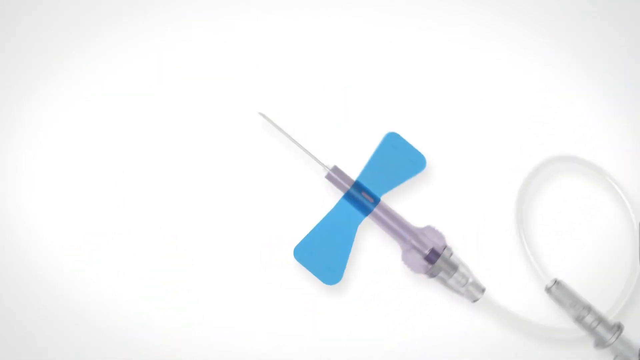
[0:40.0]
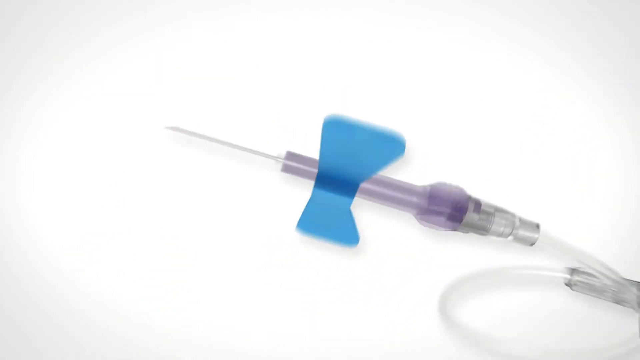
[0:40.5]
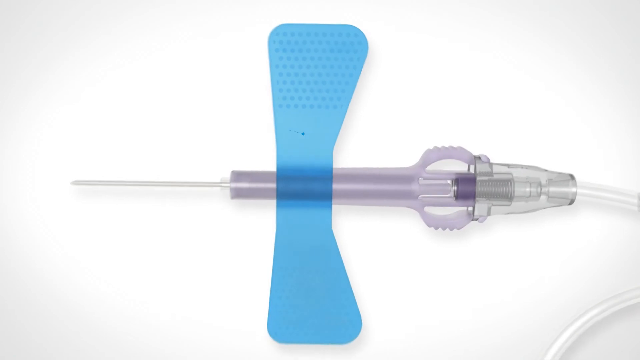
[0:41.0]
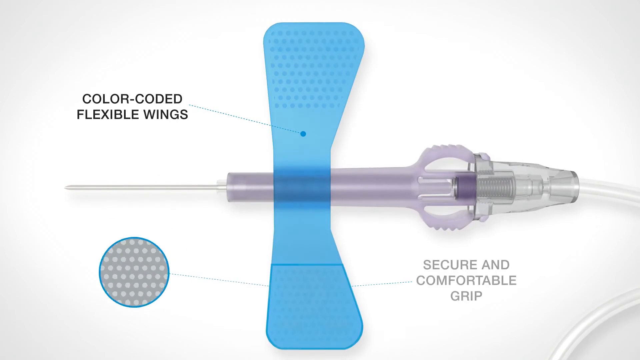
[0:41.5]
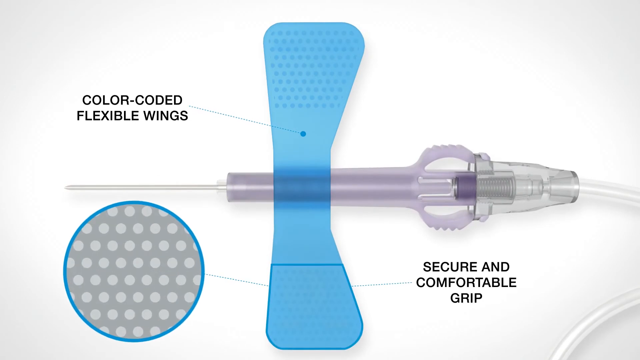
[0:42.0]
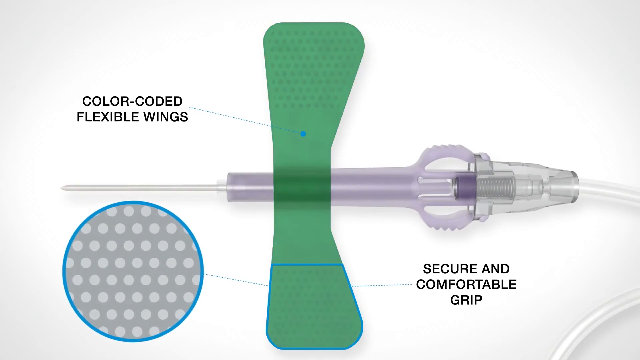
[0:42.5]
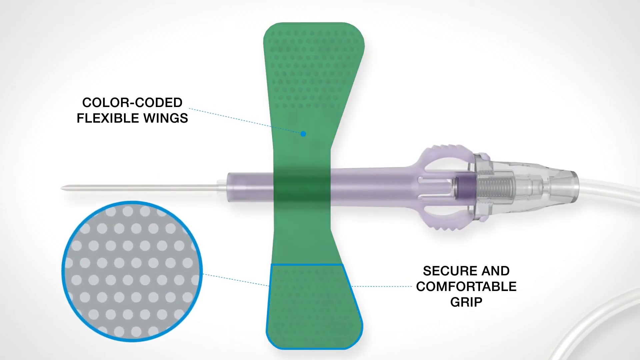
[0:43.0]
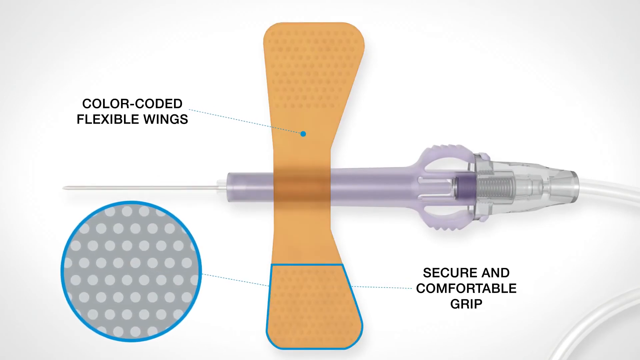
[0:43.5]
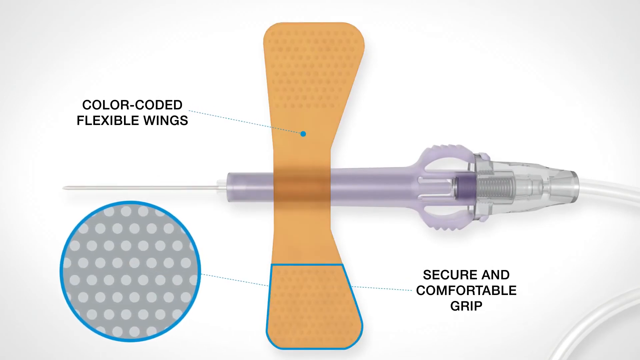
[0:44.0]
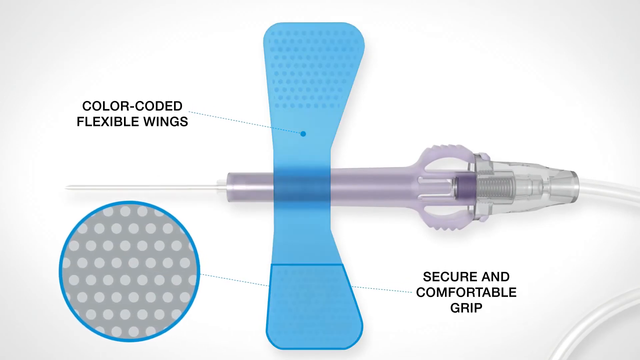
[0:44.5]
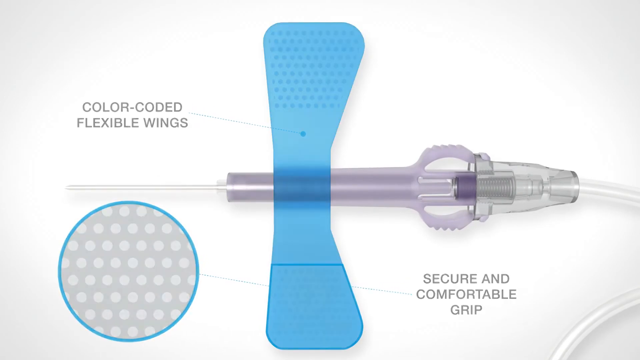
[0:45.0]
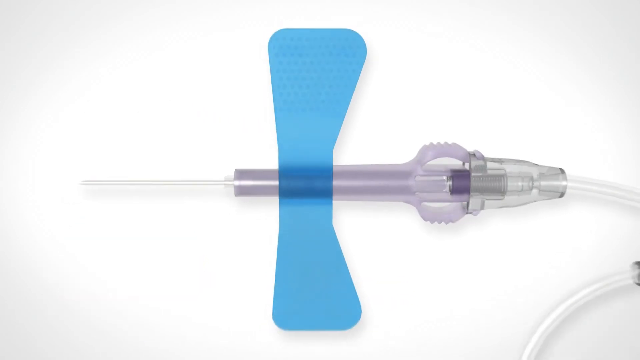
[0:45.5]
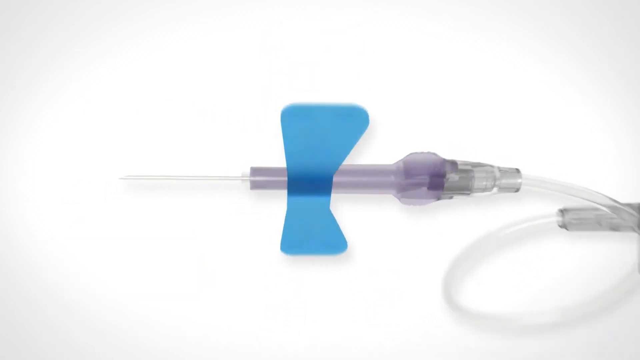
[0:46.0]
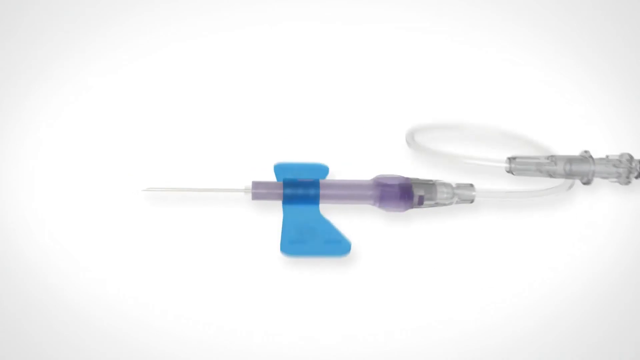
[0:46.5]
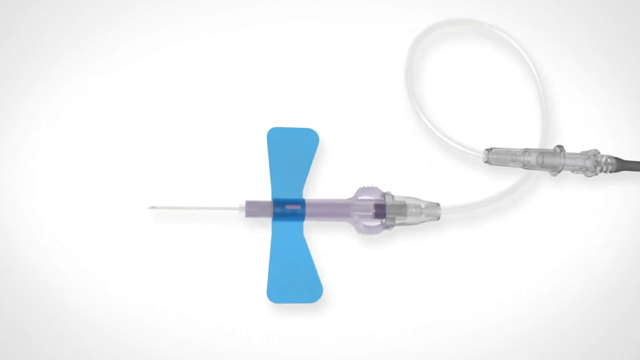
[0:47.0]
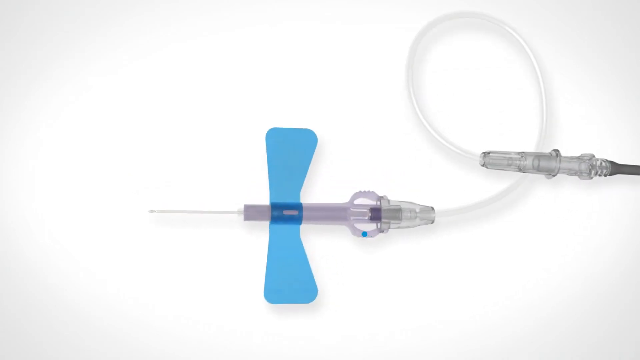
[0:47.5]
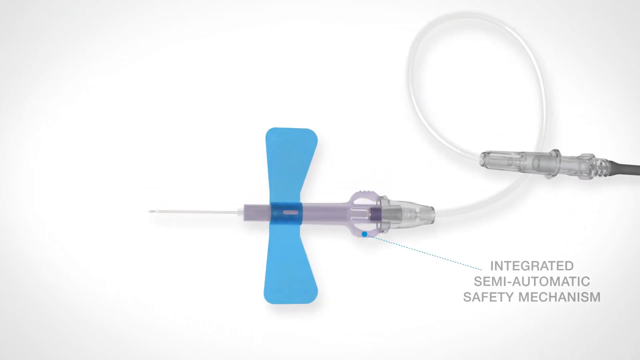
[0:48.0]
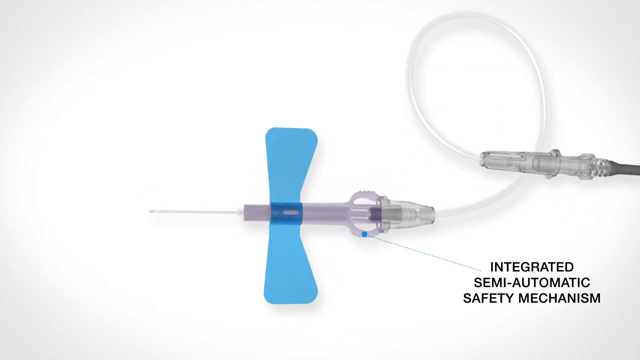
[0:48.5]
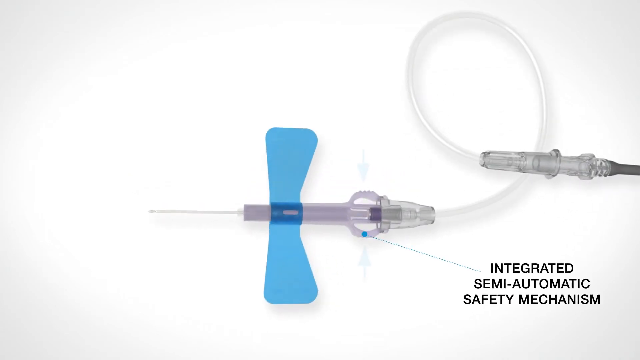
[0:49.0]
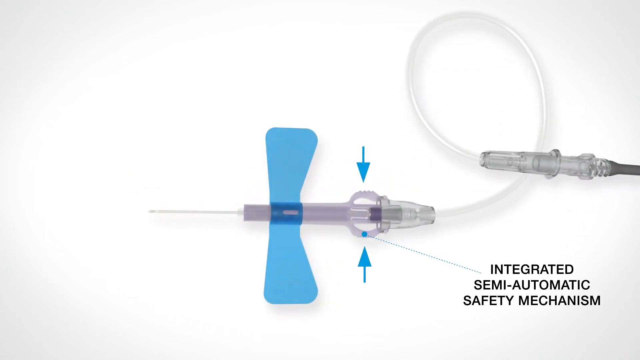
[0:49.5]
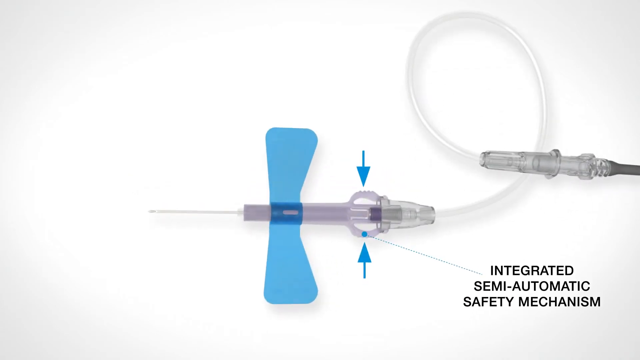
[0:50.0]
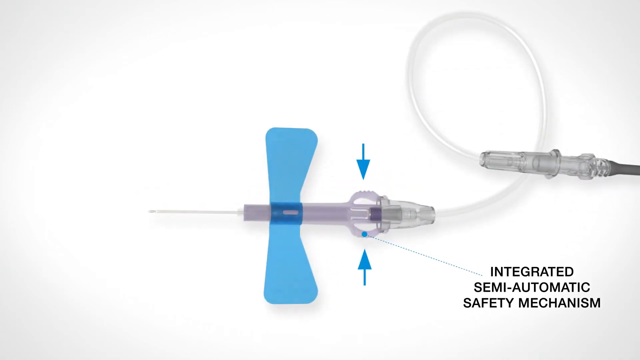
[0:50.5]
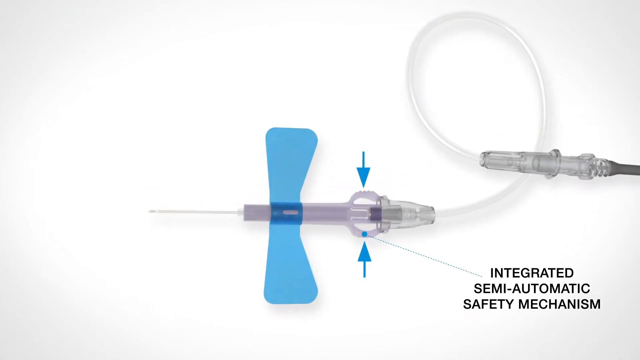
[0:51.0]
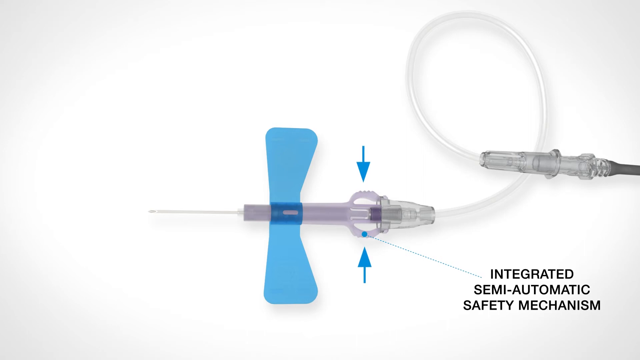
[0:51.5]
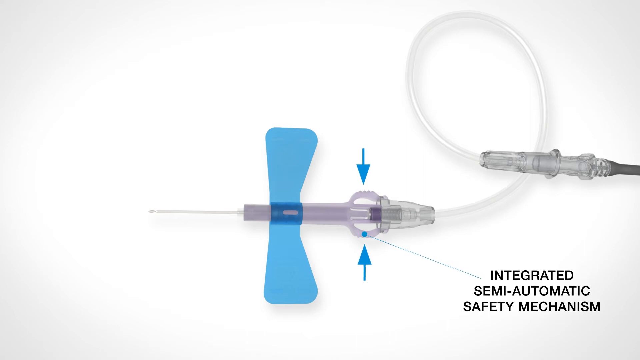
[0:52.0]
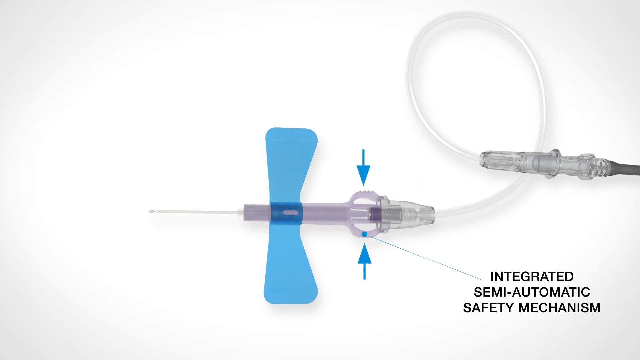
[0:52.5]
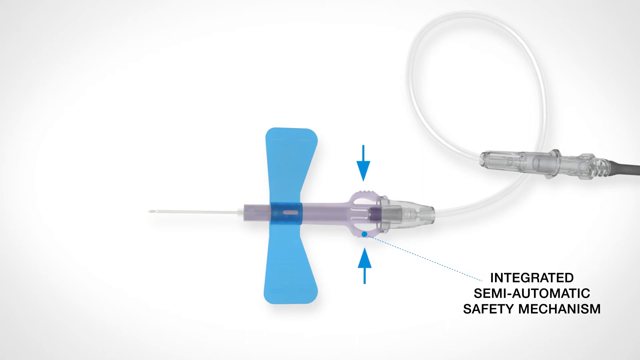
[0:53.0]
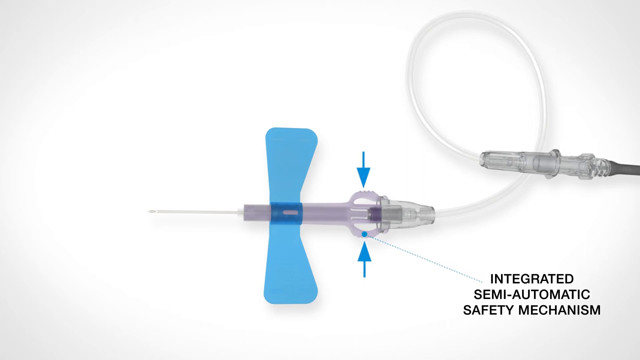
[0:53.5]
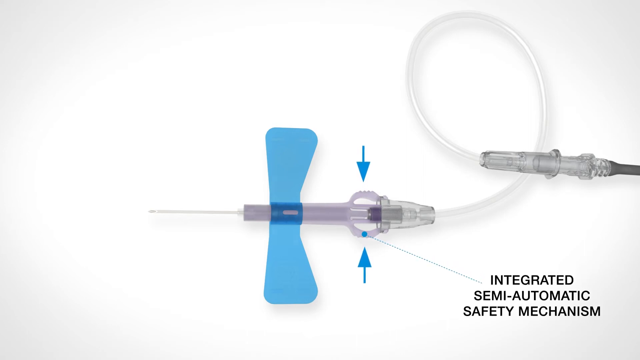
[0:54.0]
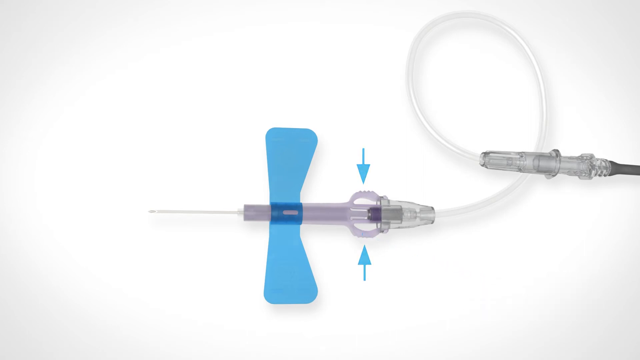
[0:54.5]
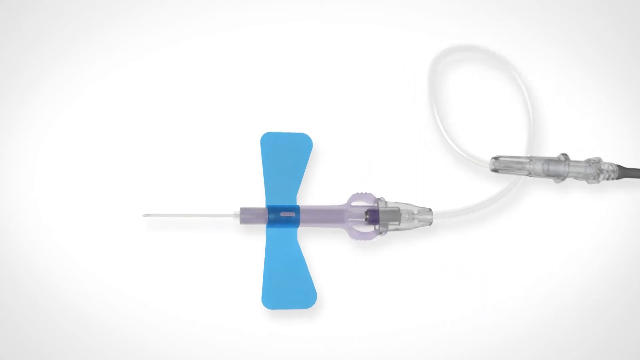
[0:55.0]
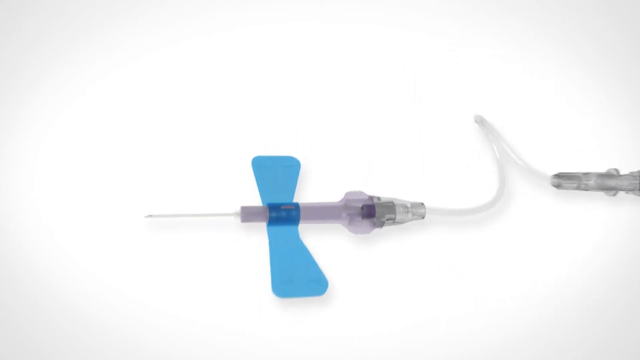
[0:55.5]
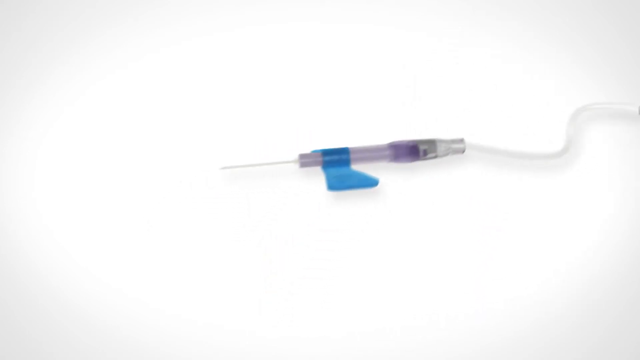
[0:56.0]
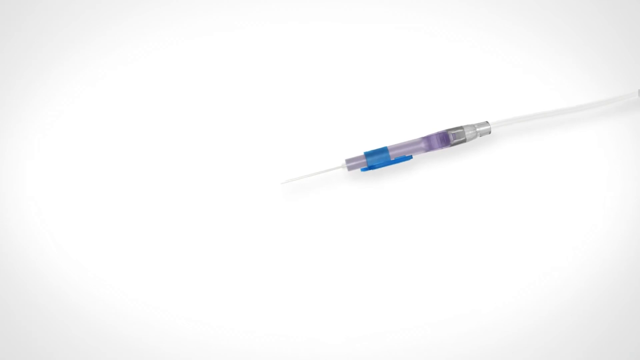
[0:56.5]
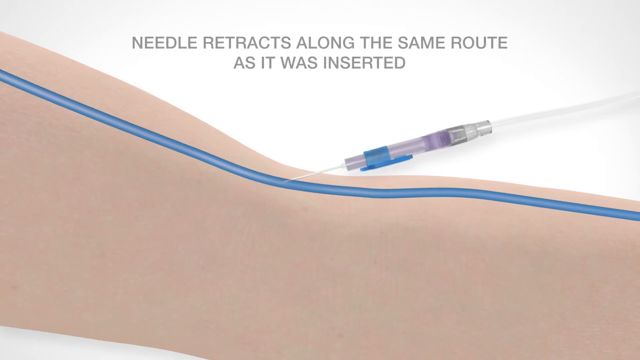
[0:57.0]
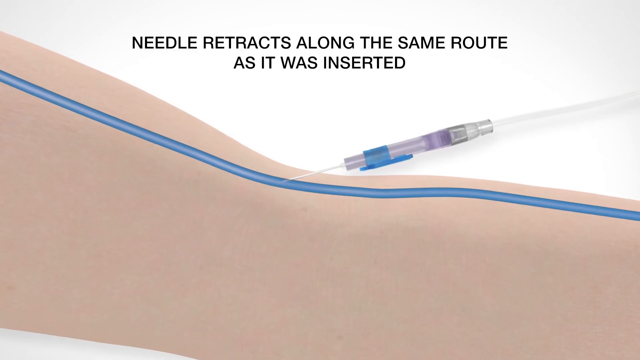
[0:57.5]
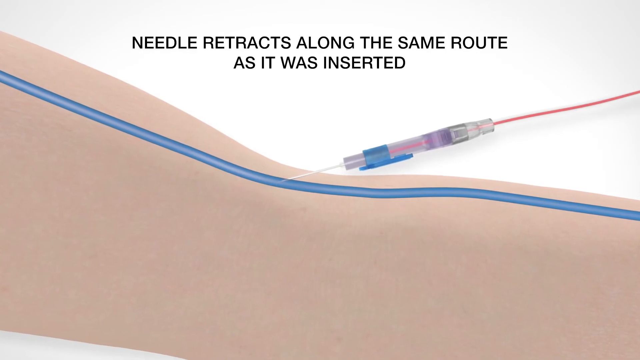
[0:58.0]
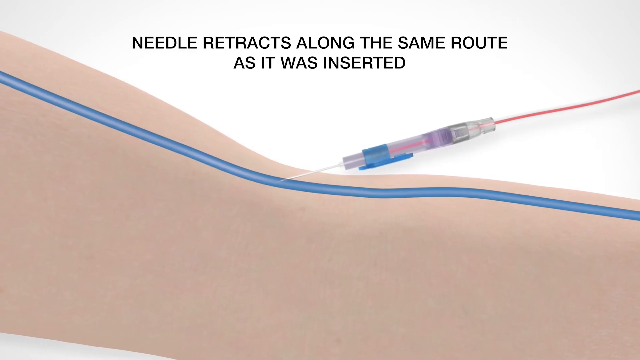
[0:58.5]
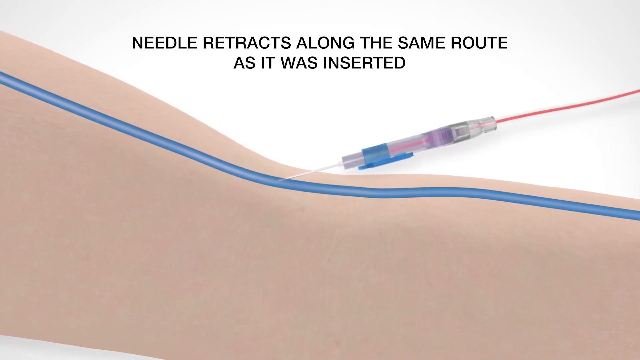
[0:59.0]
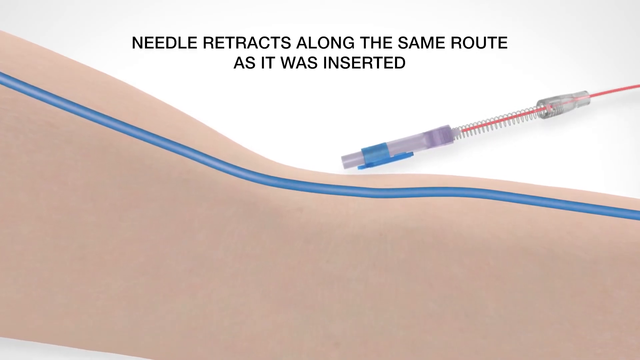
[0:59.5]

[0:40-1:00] A close-up shows the entire syringe lengthways, with the needle pointing to the left of the screen and the base at the right. Captions point out different areas of the syringe; for the wings, a caption says "color-coded flexible wings" and "secure and comfortable grip." The video then focuses on the base of the syringe, where two blue arrows, one on top and one below, point at the base area, with a caption that says "Integrated Semi-Automatic Safety Mechanism." Finally, the syringe is shown in action: a human arm goes from left to right, the elbow is highlighted, and the syringe is being injected into the elbow area, with a caption that says "needle retracts along the same route as it was inserted."